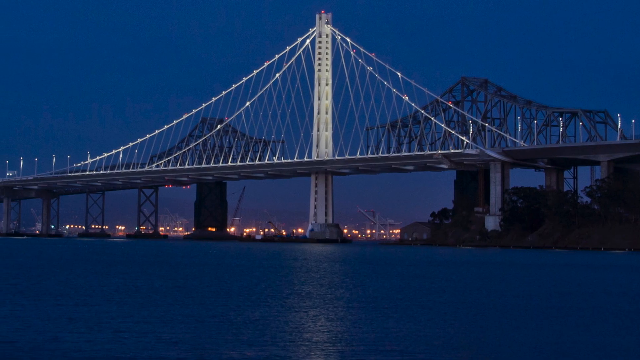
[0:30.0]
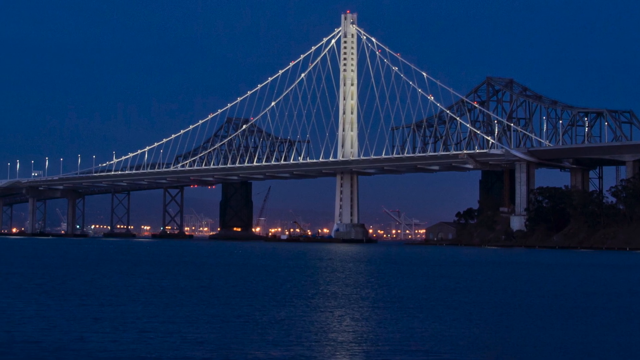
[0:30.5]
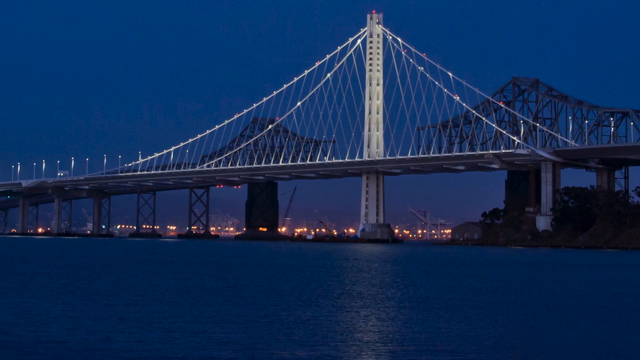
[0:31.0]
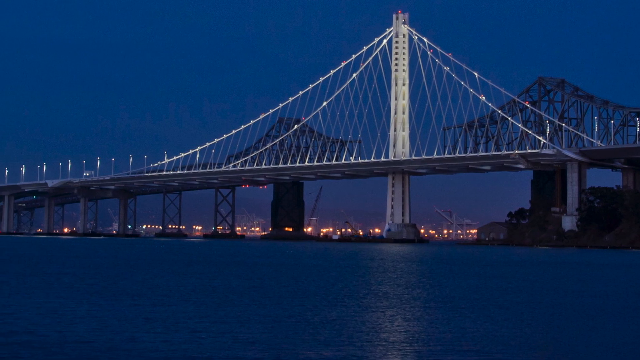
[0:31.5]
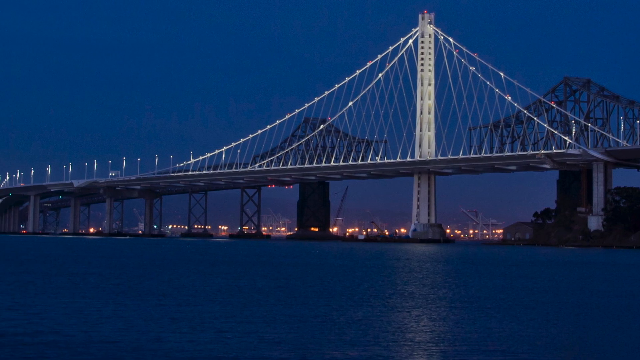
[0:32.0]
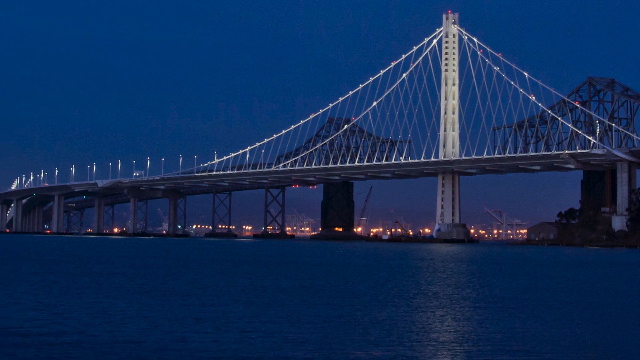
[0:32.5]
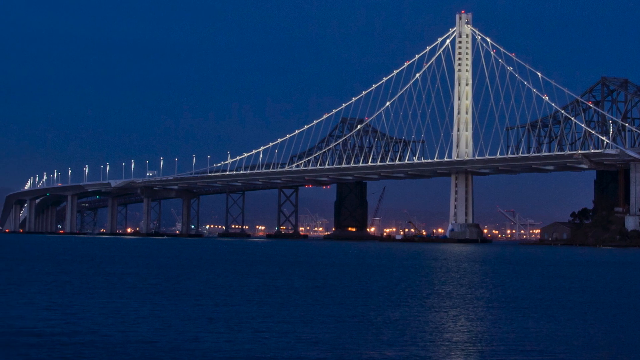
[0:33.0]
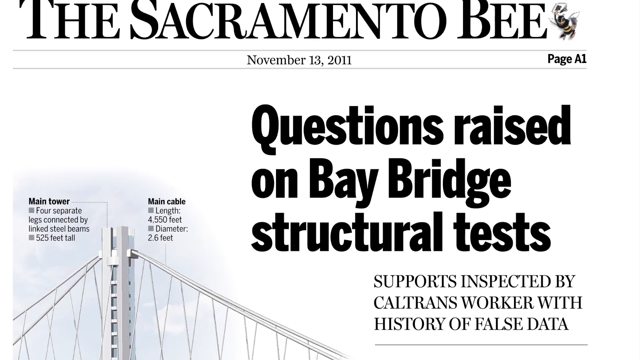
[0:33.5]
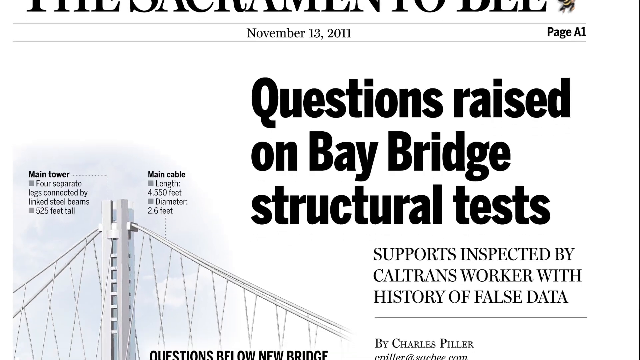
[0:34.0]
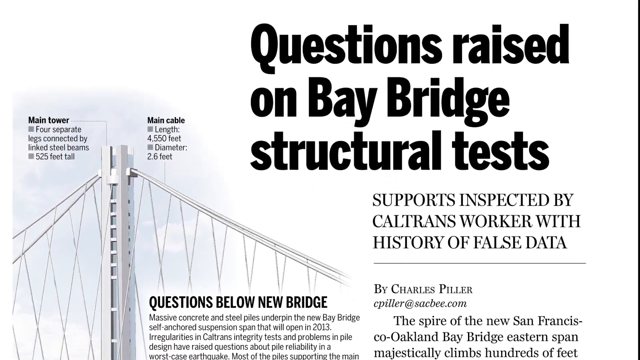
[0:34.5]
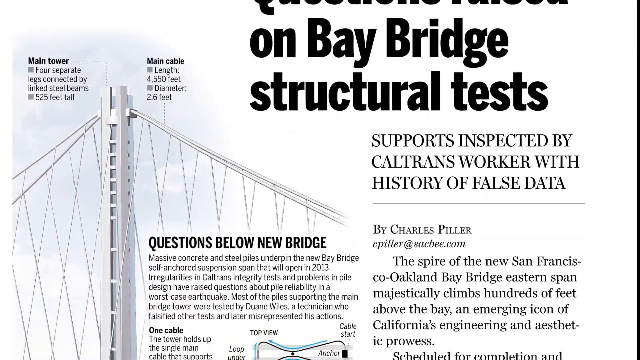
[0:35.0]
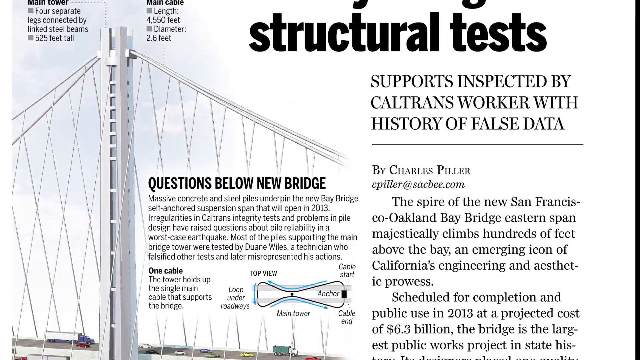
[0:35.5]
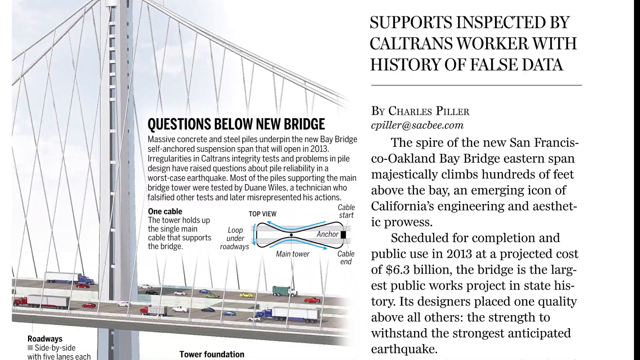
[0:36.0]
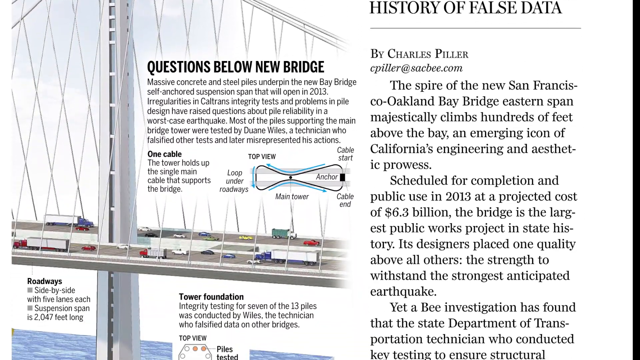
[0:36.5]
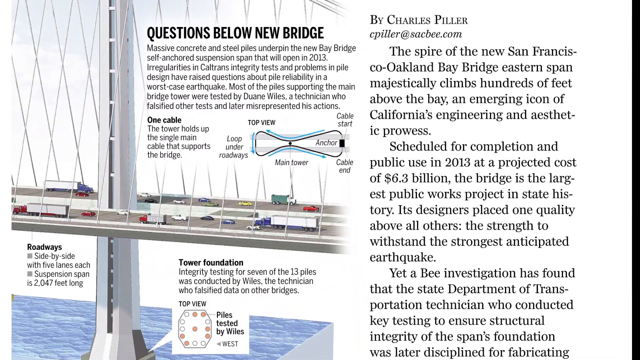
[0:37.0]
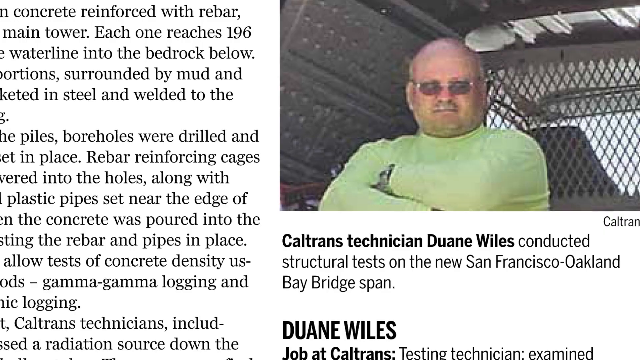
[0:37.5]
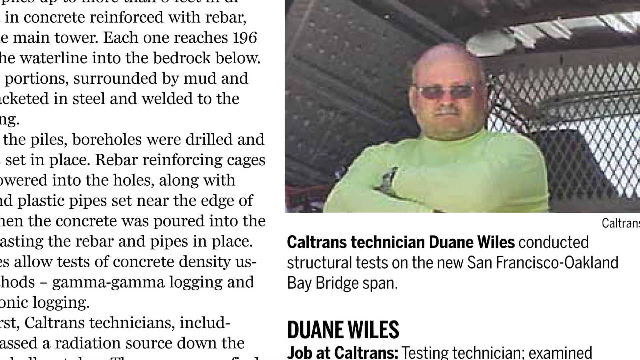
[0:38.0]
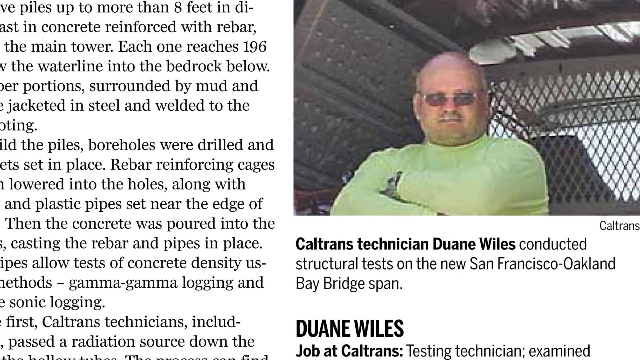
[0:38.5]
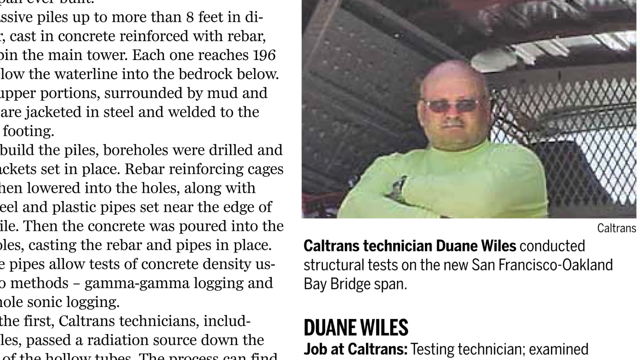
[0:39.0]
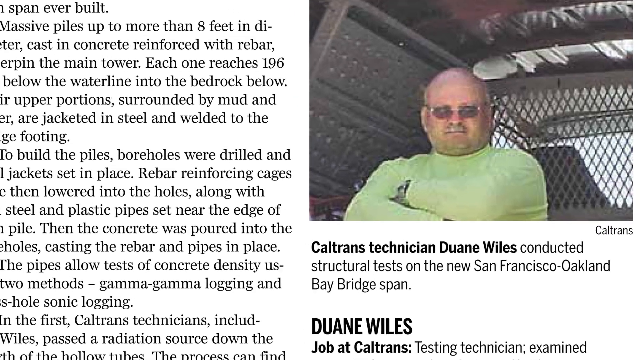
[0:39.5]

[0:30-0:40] A picture of a bridge is in the background. The bridge is white in the center, and suspension cables run from the top of a white pillar at the center of the bridge down to the bridge deck. The picture appears to have been taken at night; dark water is visible underneath, and the lights of the city are behind the bridge. The view pans to the left of the picture, and a newspaper clipping from the Sacramento Bee appears, viewed from the top and moving downward. It has the title "Questions raised on Bay Bridge structural test," a drawing of the same bridge on its lower left side, and text around it. Another newspaper clipping follows with a picture of a man in a long-sleeved green shirt who is folding his arms. He wears sunglasses, is bald, and looks to be in his 50s. Beneath his picture is the text "Caltrans technician Duane Wiles conducted structural tests on the new San Francisco-Oakland Bay Bridge span," with text surrounding the picture. The view slowly zooms out from the picture, revealing more of the newspaper article.